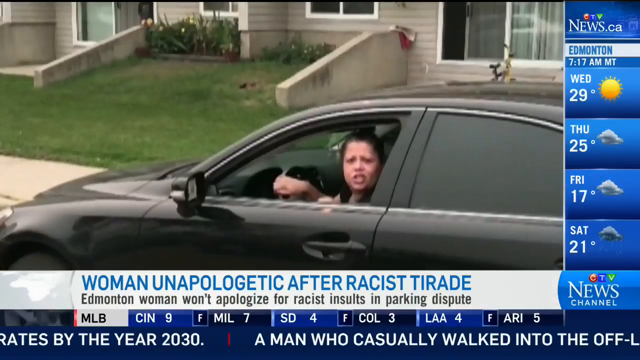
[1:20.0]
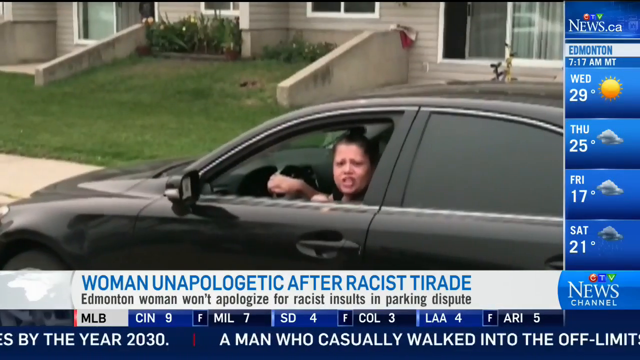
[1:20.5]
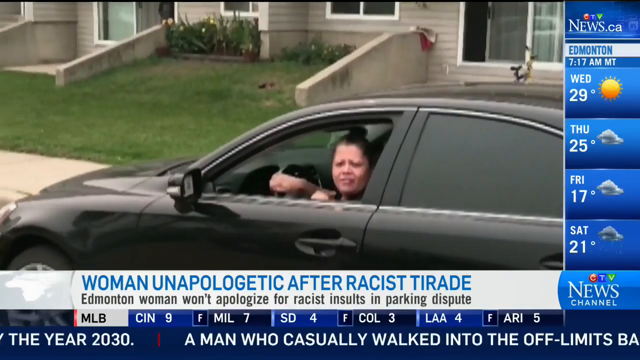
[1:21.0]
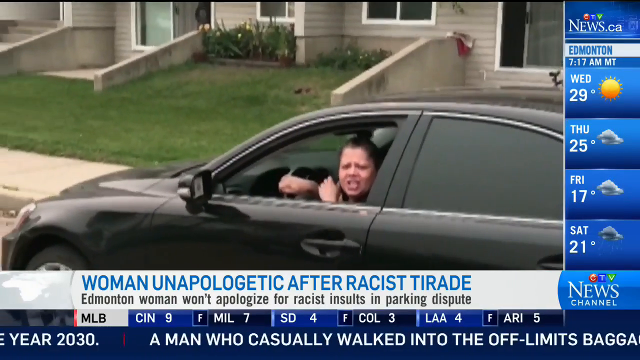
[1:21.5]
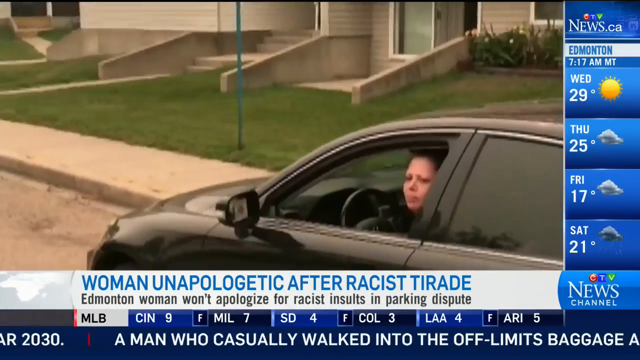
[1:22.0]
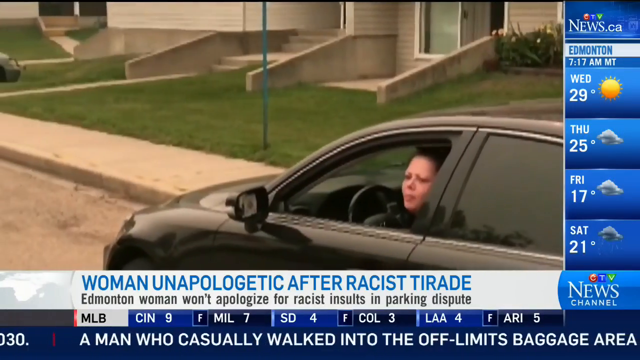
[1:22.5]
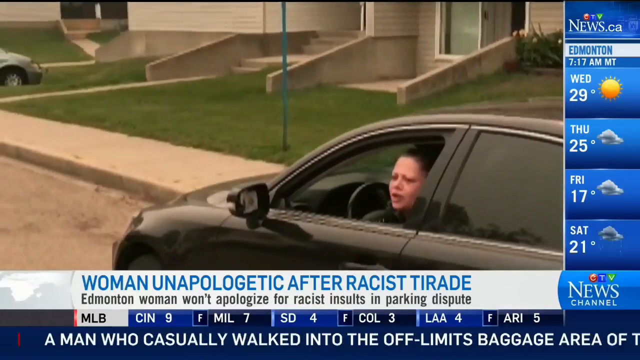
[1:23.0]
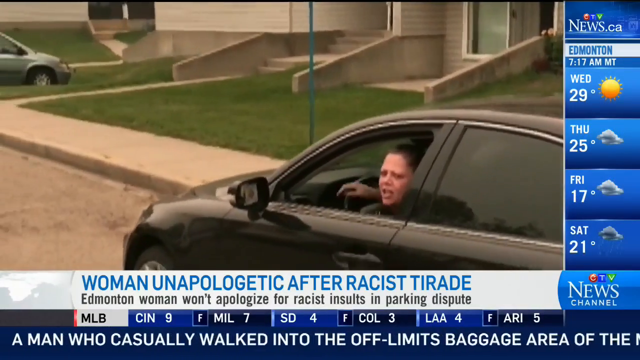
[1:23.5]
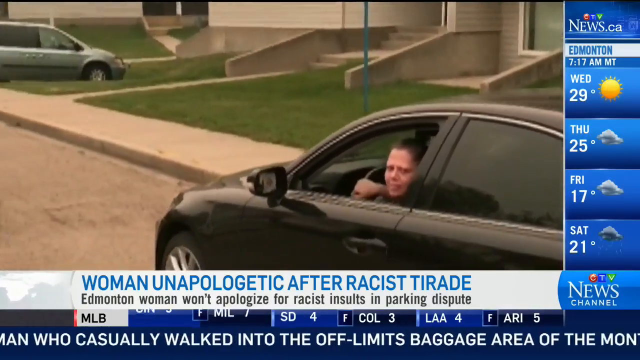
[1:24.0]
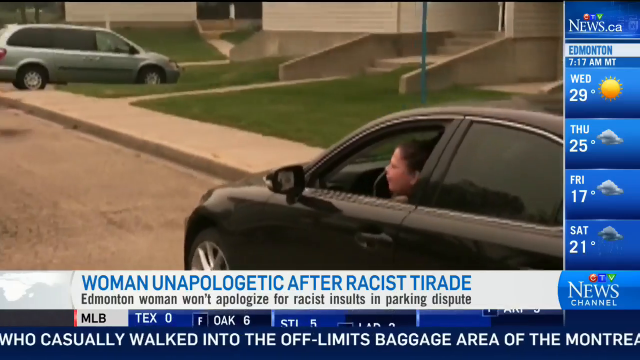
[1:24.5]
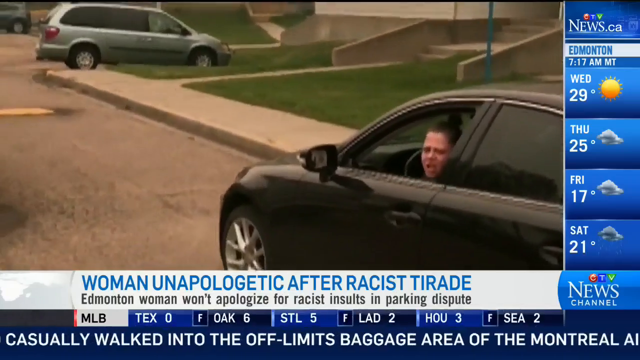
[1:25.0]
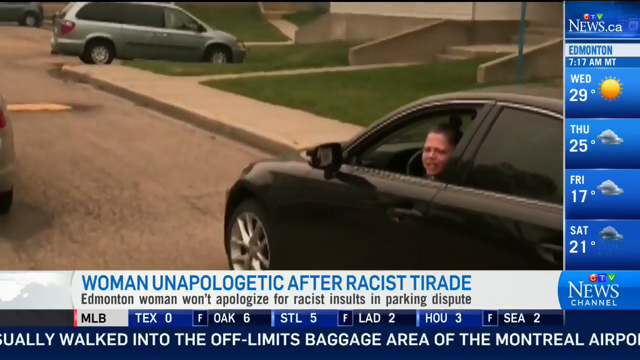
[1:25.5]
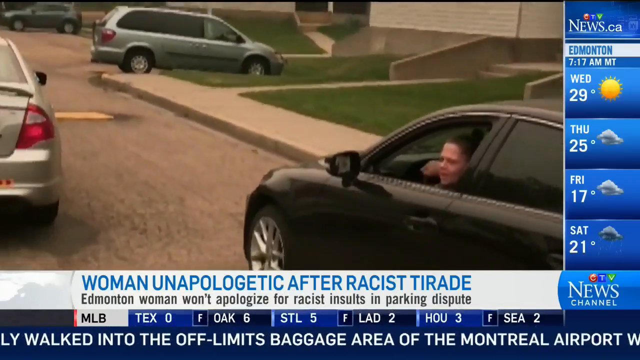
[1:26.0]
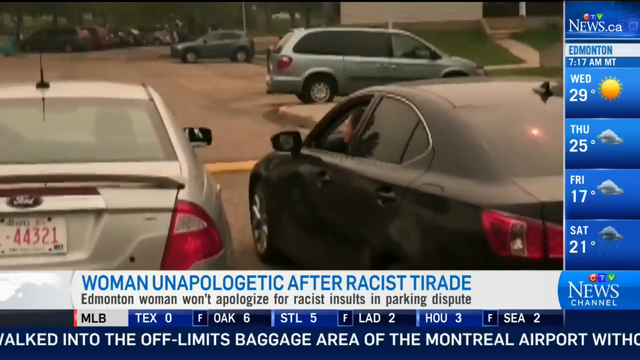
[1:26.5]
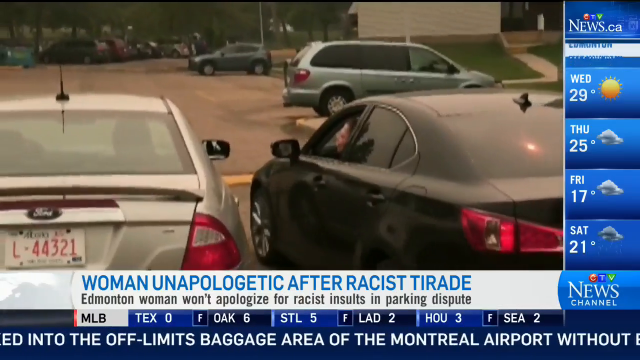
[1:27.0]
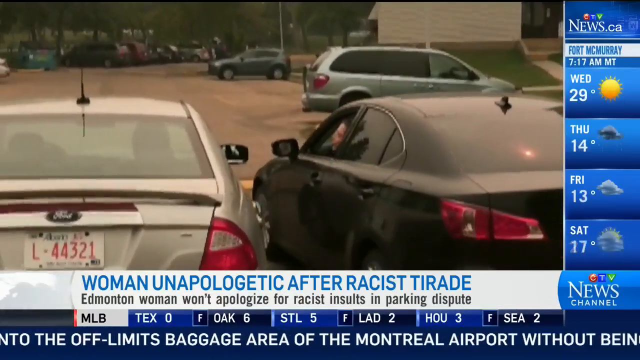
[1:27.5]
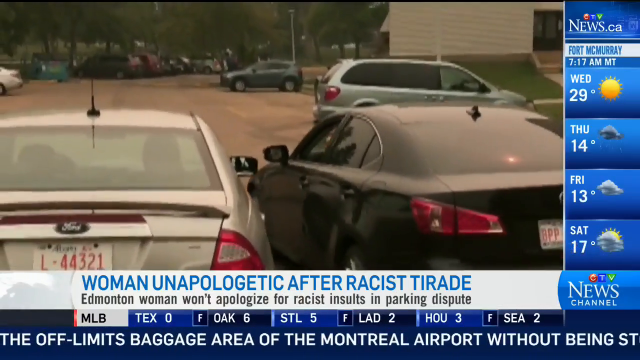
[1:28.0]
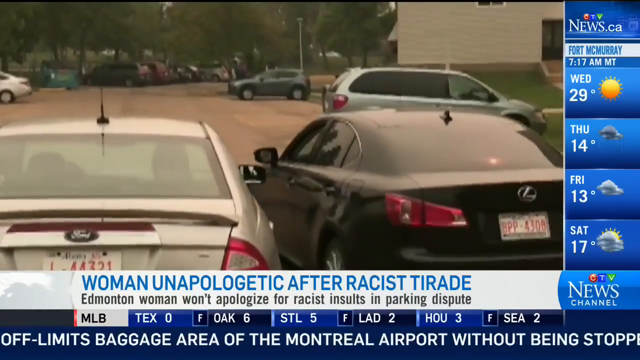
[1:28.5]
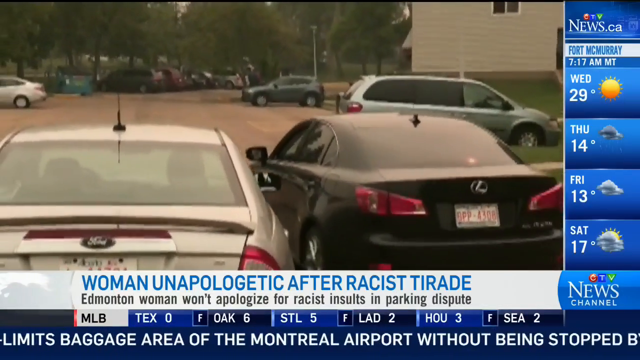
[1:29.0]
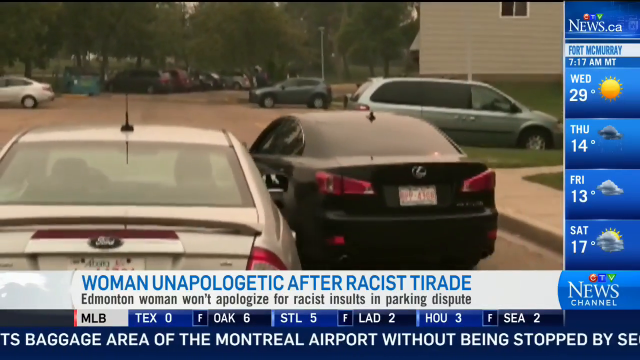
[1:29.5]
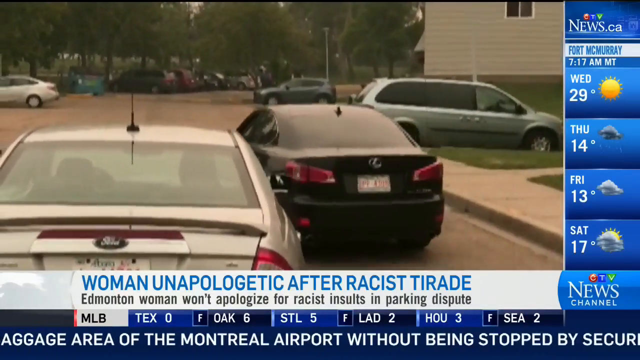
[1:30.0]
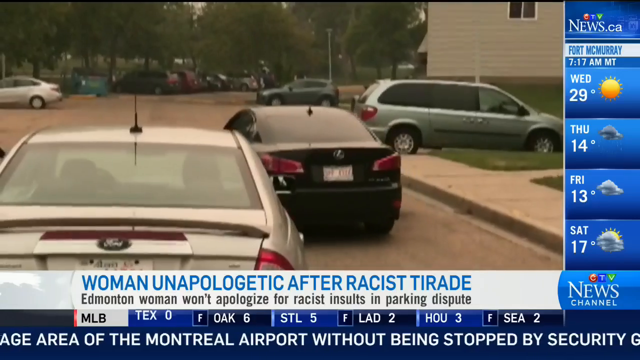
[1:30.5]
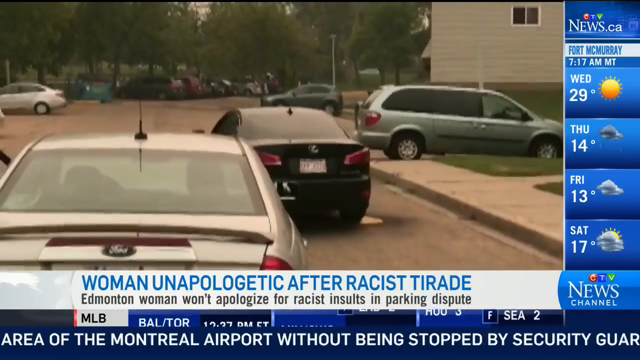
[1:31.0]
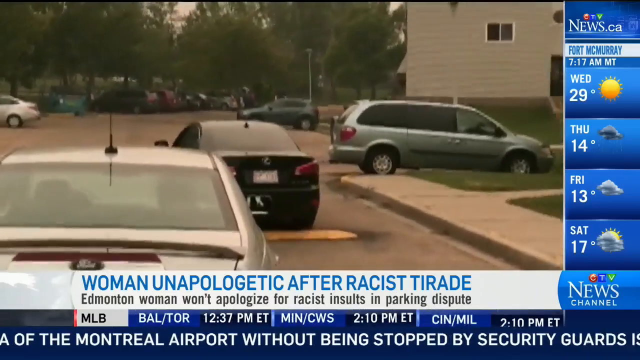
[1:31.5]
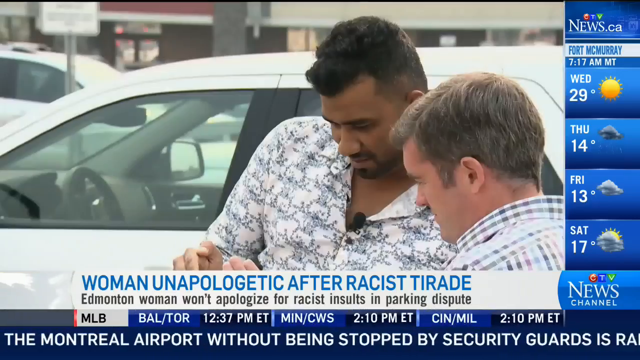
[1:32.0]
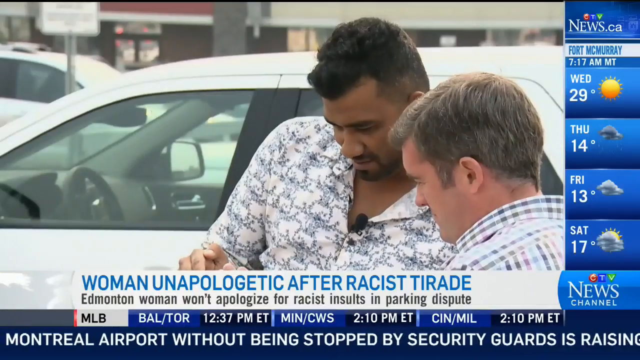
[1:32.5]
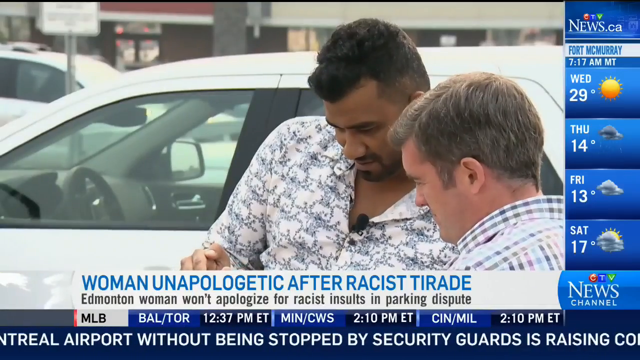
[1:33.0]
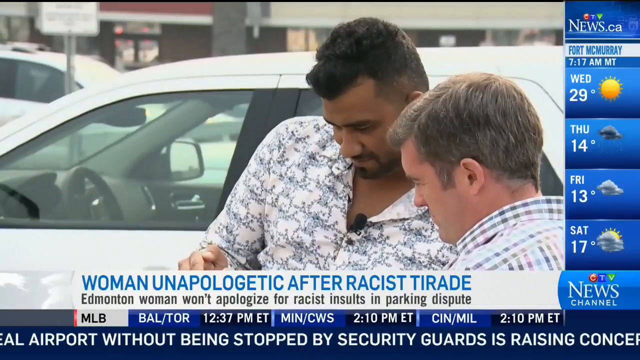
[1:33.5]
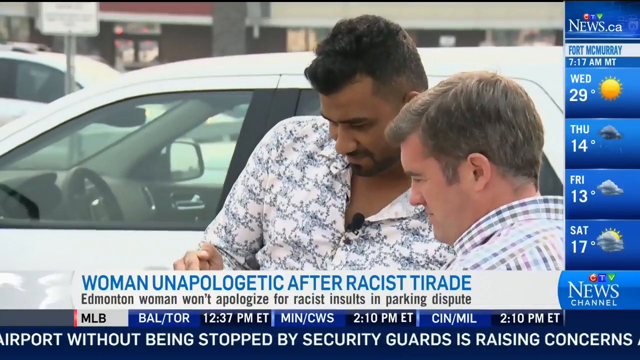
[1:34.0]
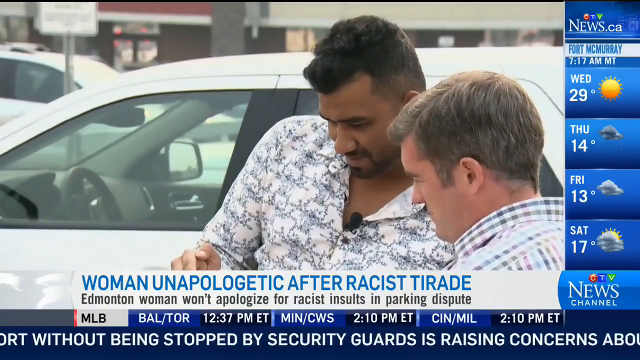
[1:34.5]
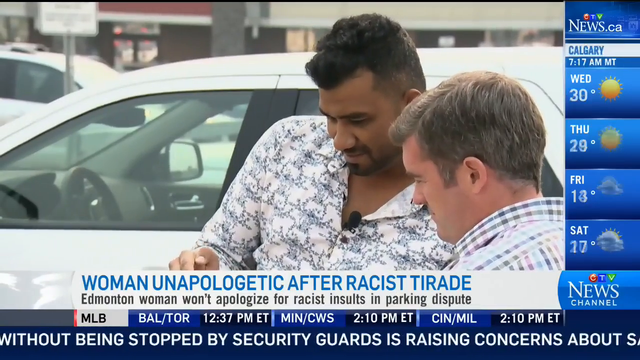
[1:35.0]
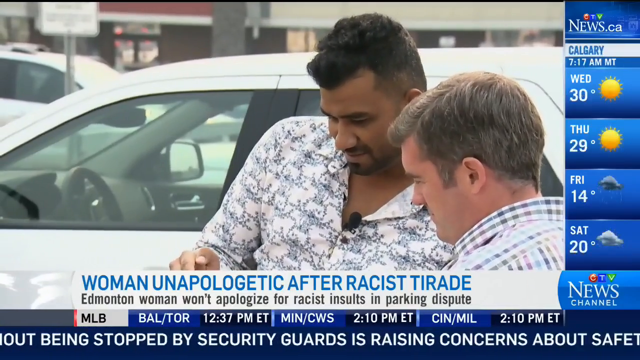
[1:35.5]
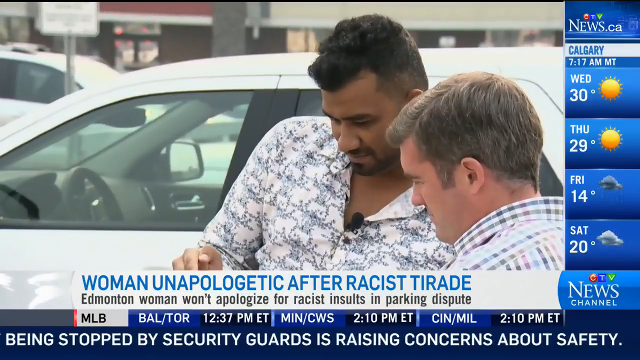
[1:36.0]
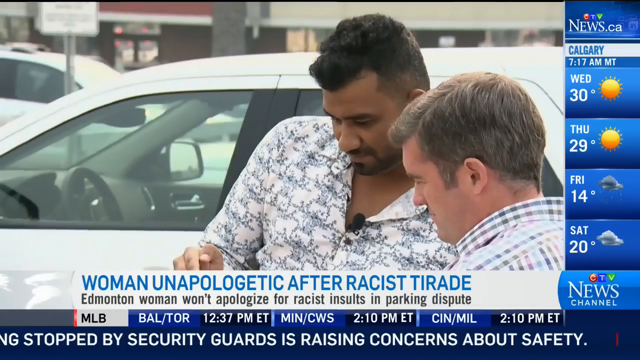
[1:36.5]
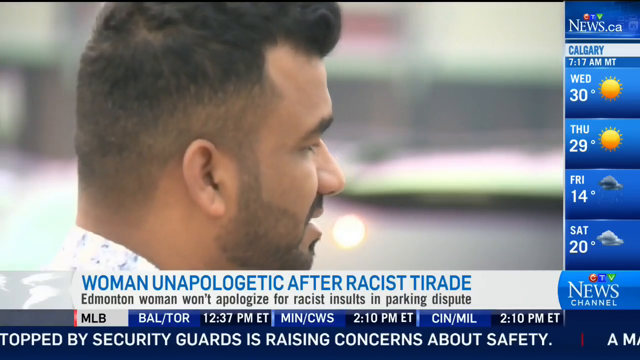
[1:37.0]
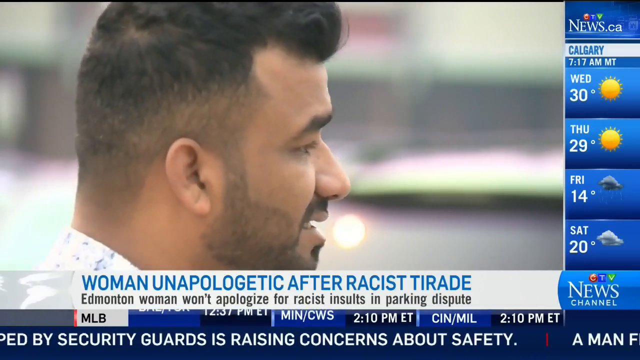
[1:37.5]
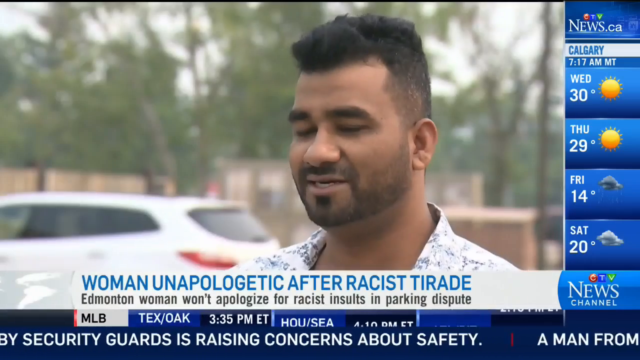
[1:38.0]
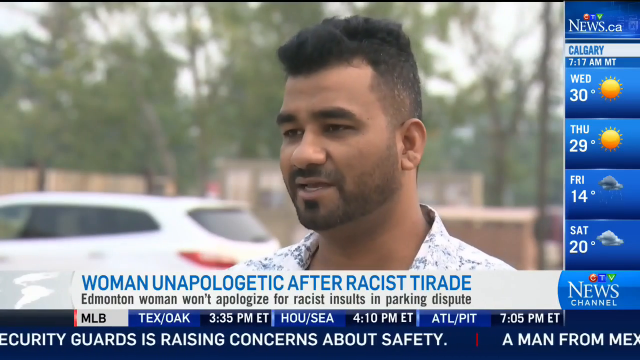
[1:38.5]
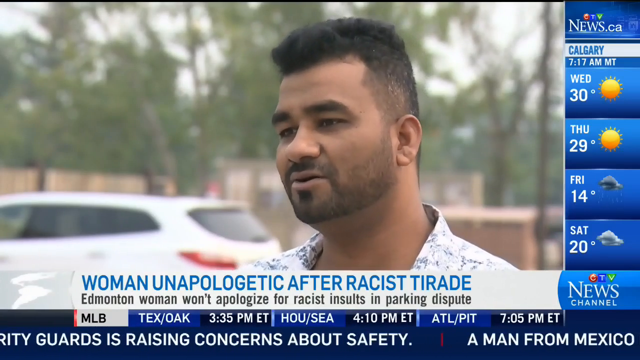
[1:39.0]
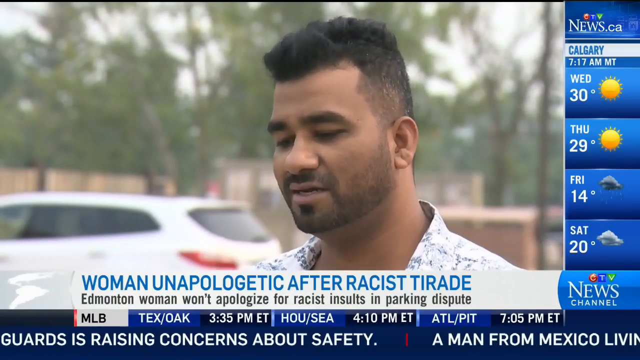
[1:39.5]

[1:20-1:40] A woman, possibly white, sits in her car, a black four-door vehicle. She is angry and yells at the camera, seemingly talking to one person. The driver's-side mirror of her car seems to be missing. She drives away slowly as she talks. On the left-hand side is another car that looks to be a Ford, silver, with a small antenna on top. Her car, a Lexus, rides over a speed bump that looks to be yellow. The camera then moves to two men who seem to be looking at something in their hands, and then to one young-looking man with brown skin who talks briefly.